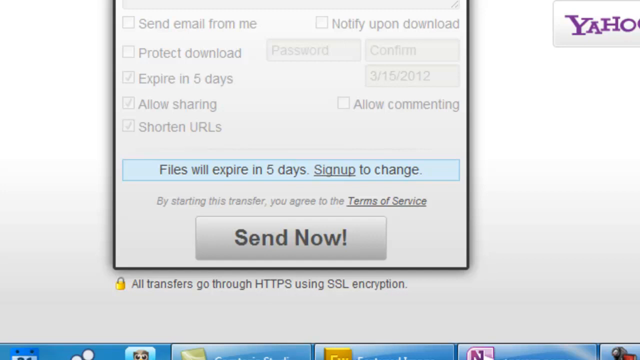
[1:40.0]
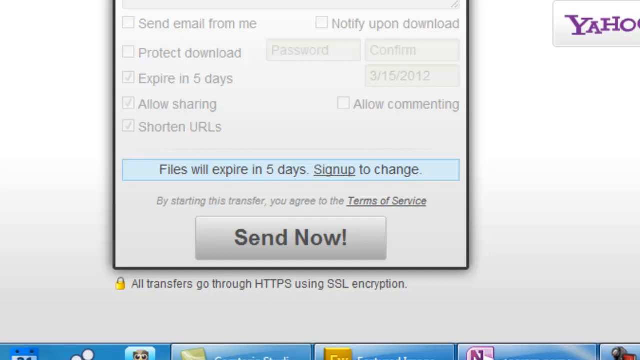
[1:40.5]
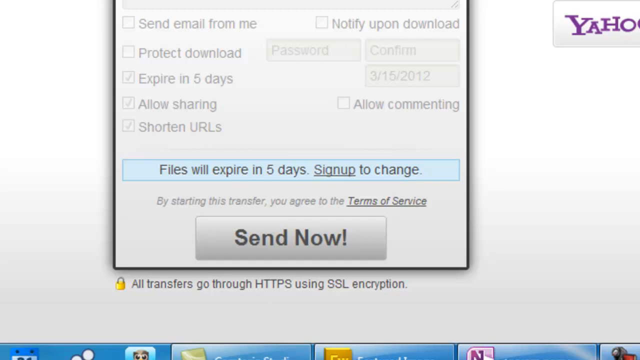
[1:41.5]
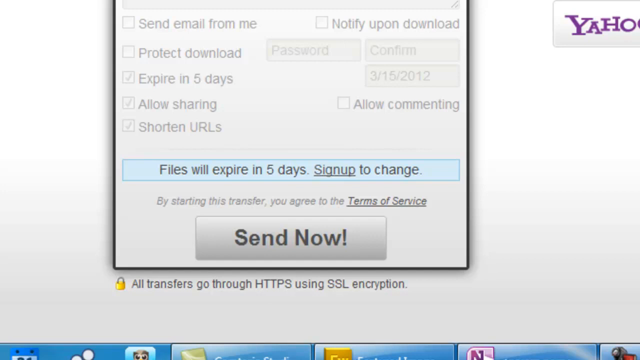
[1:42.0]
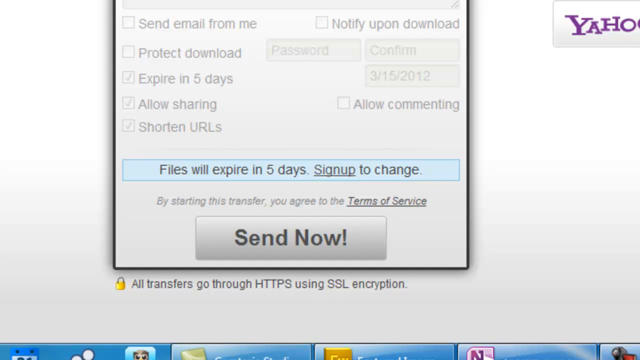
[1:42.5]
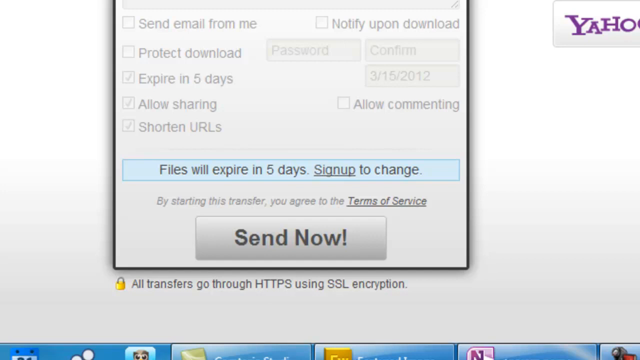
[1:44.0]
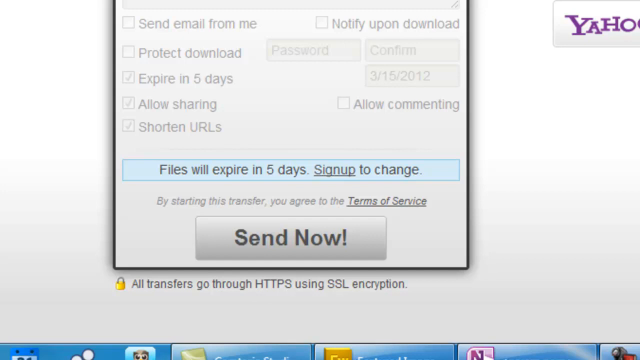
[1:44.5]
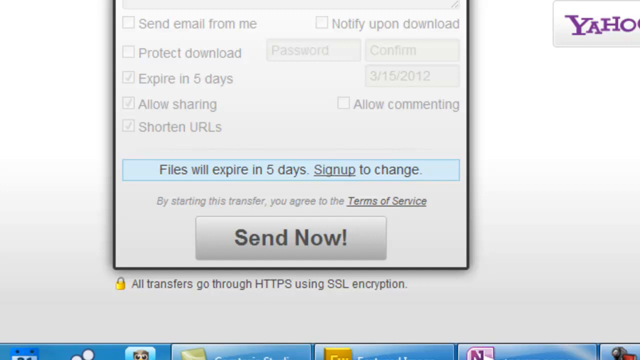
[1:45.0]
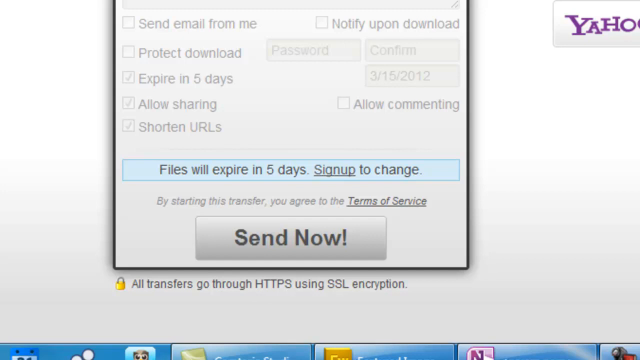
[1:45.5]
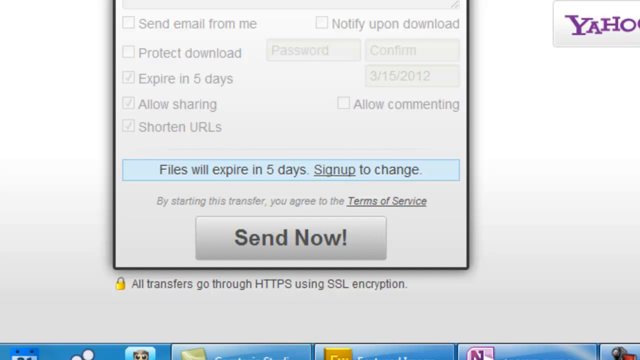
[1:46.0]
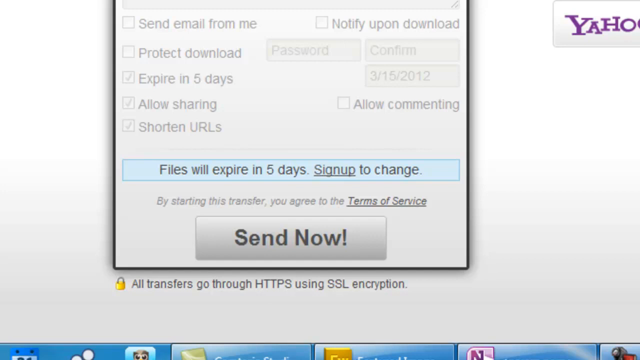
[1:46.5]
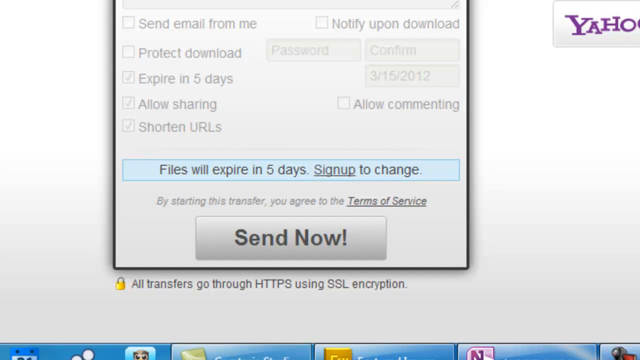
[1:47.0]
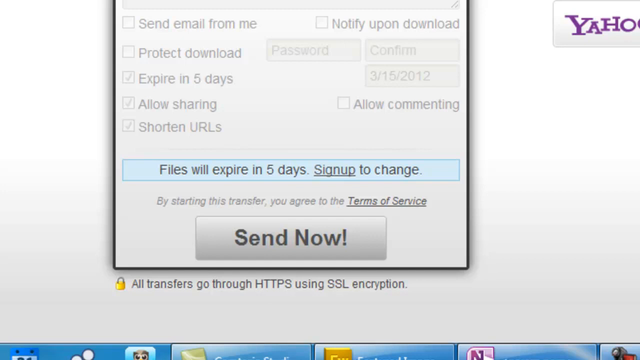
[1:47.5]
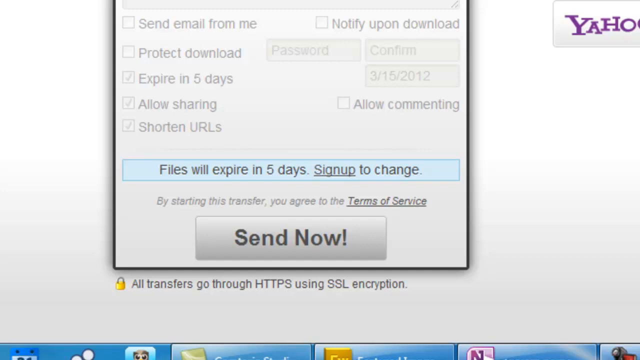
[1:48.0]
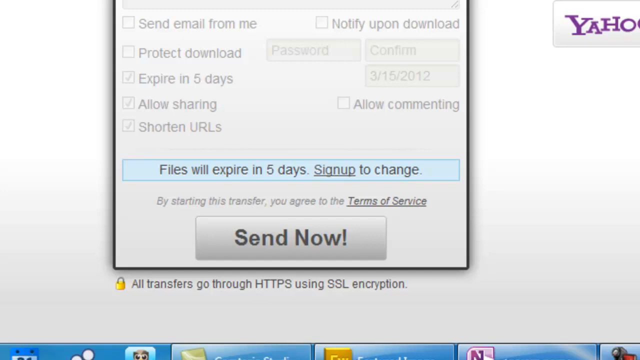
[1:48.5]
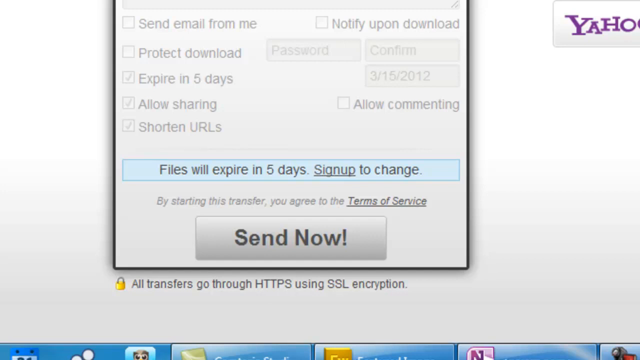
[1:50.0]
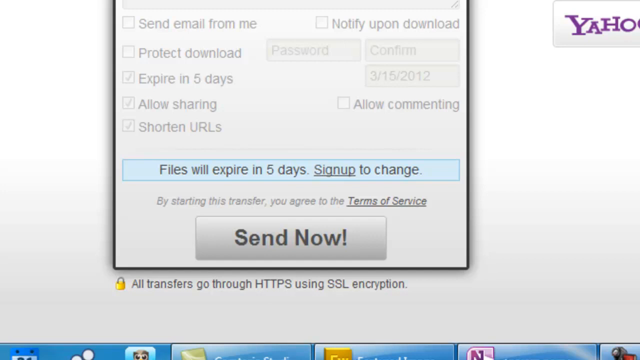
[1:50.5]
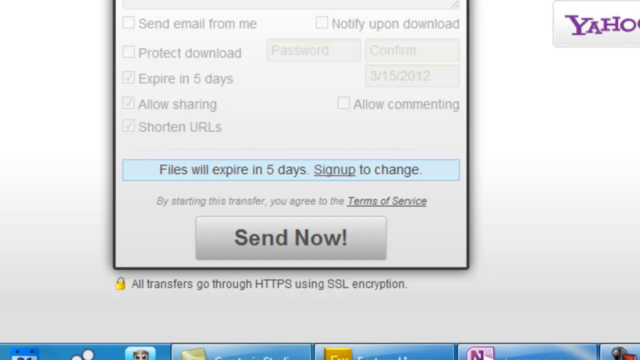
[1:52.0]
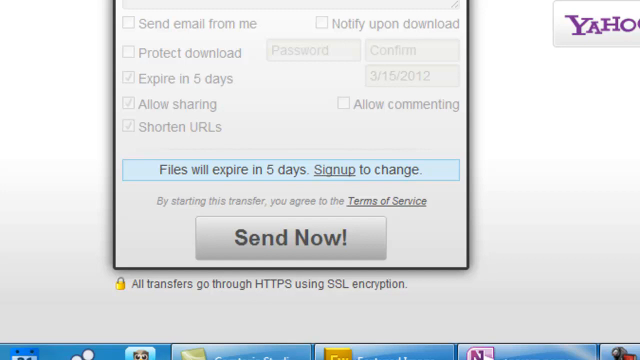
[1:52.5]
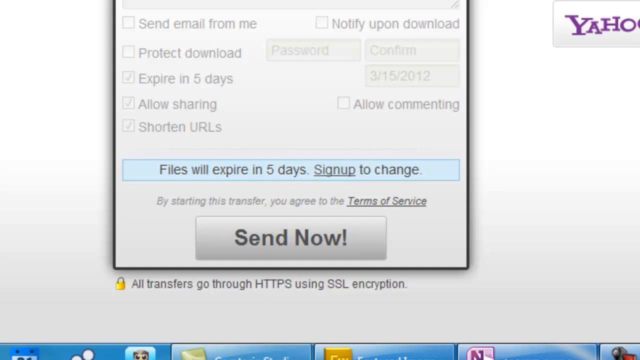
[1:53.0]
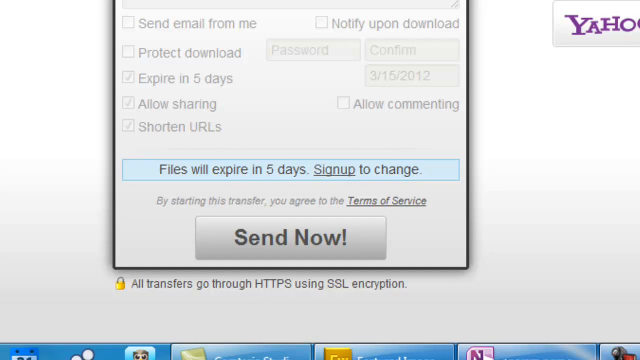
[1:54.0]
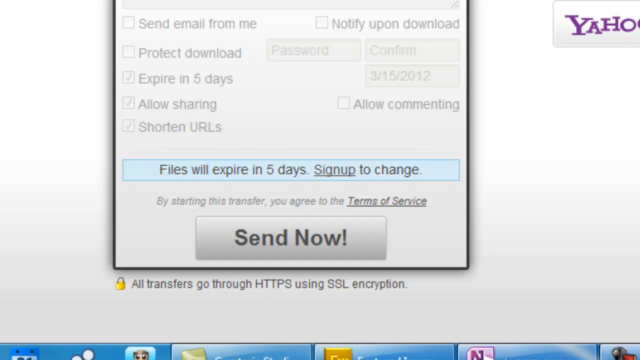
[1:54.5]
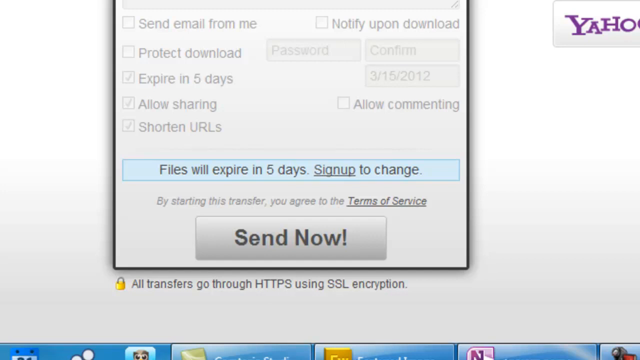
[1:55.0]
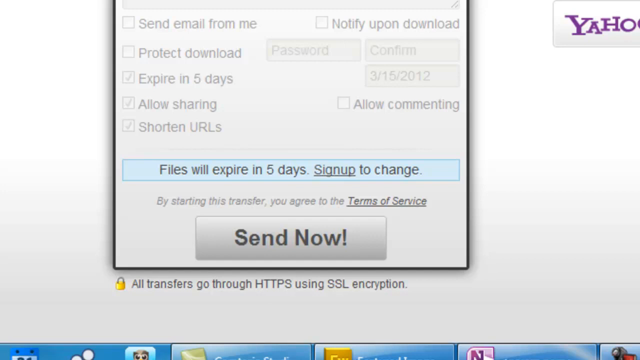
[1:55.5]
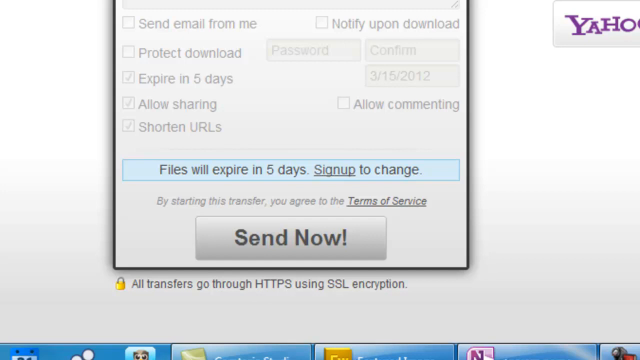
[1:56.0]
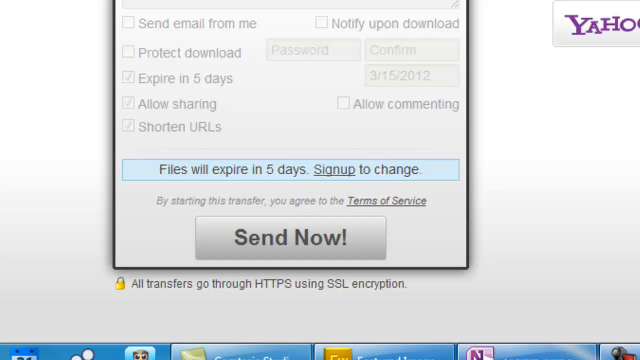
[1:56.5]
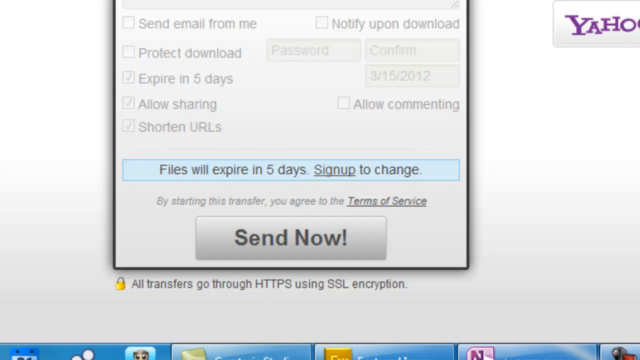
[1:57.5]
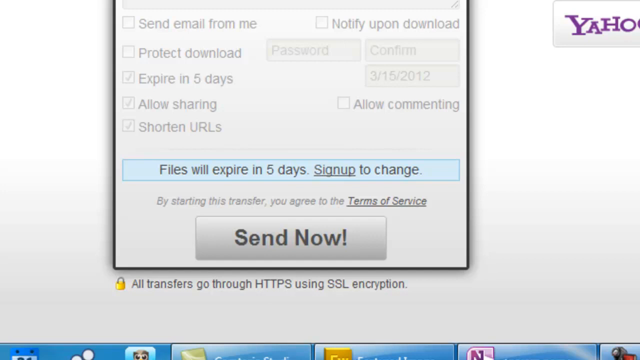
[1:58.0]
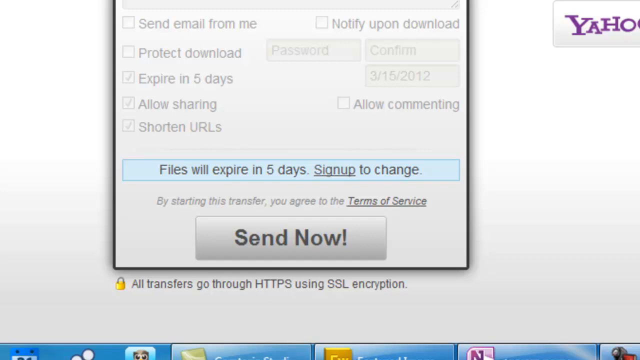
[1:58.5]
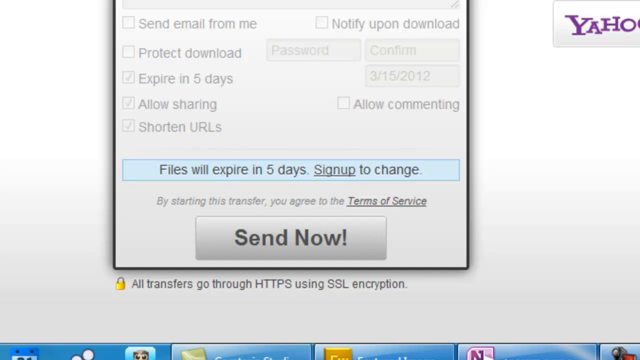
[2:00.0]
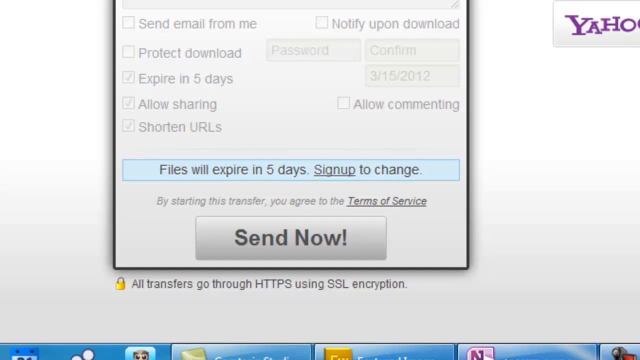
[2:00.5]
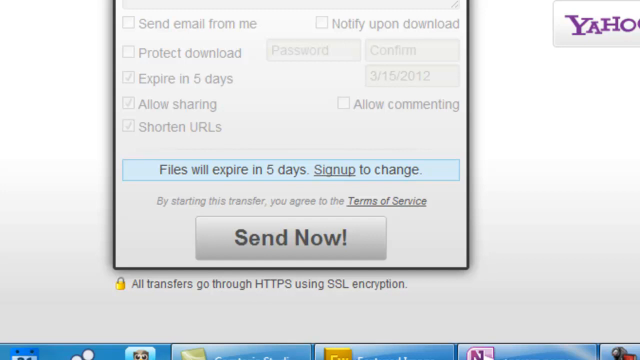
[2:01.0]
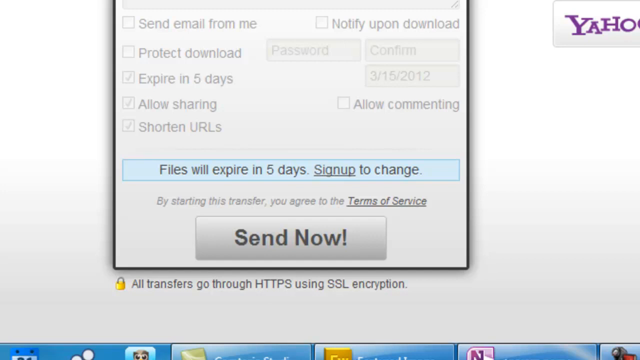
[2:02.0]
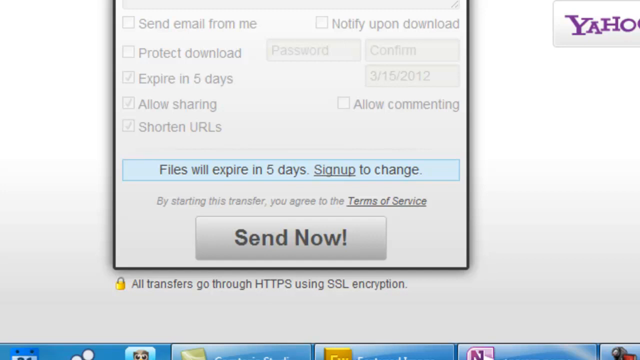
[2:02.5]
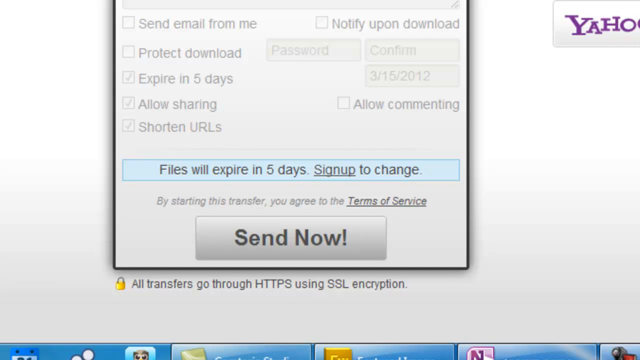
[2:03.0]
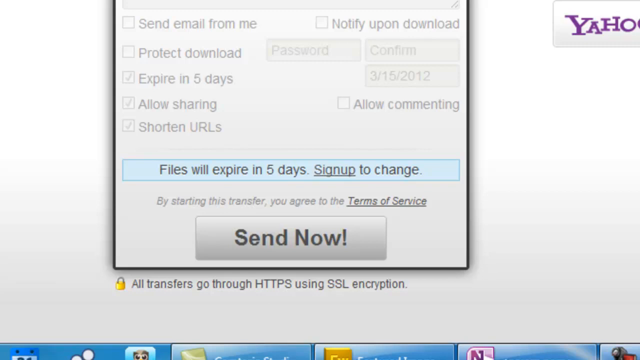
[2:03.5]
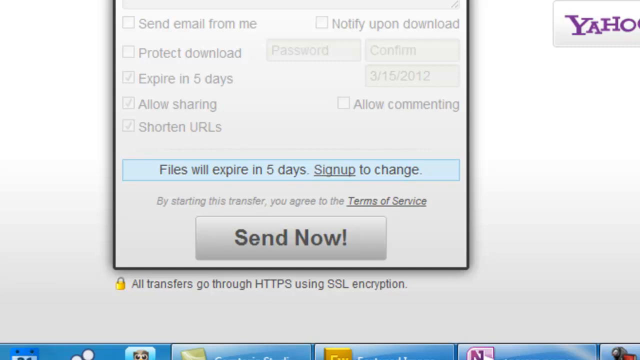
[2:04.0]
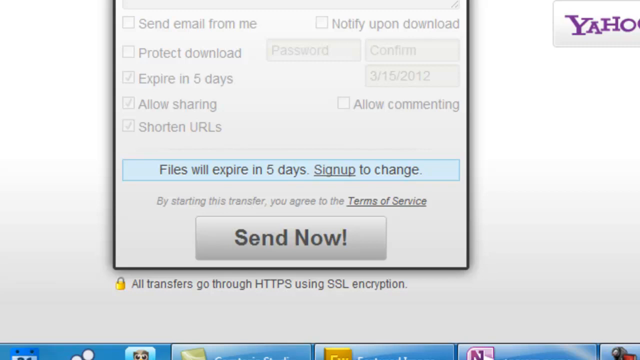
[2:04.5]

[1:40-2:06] A square grey box at the bottom of the screen says "send now" in bold black text with an exclamation mark. Beneath it is a yellow padlock, and next to this icon is the text "all transfers go through HTTPS using SSL encryption". At the top right, the beginning of the Yahoo logo is visible, only the purple letters "YHAO" before it cuts off. The blue banner across the screen above the send now section says "files will expire in five days", with "sign up" underlined before "to change". Above this are square checkboxes: "expire in five days", "allow sharing" and "shorten URLs" are all checked. Only "send now" and the files will expire banner are bold and forward; everything else is in faded text, making it less obvious. There is italic text reading "by starting this transfer you agree to the terms of service", with "terms of service" in italic, bold and underlined.